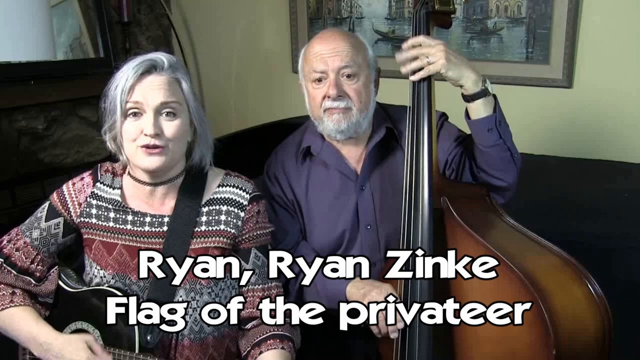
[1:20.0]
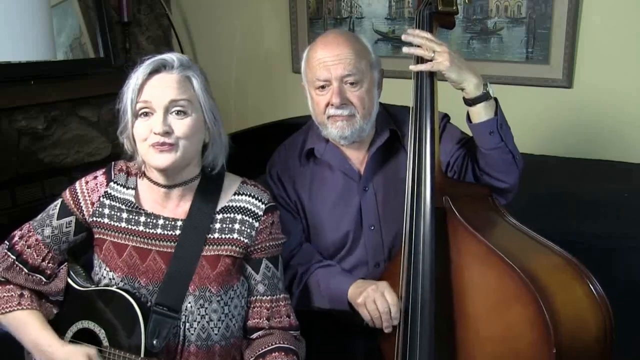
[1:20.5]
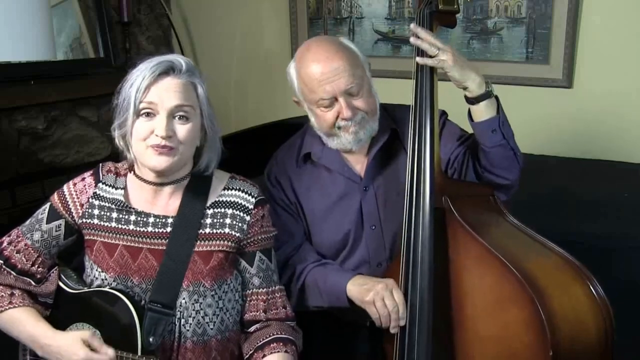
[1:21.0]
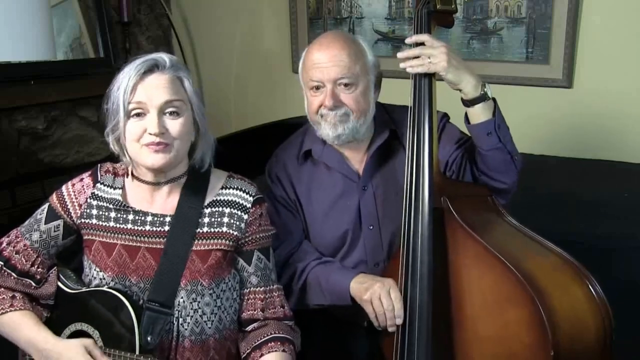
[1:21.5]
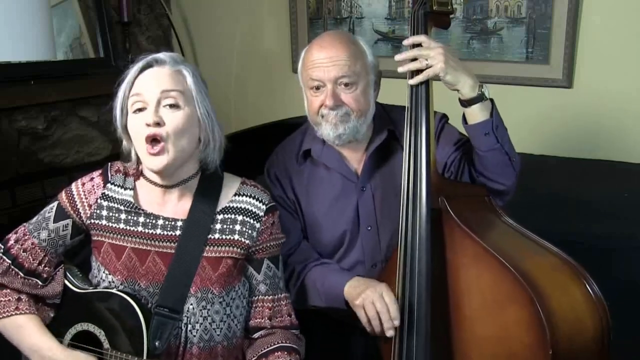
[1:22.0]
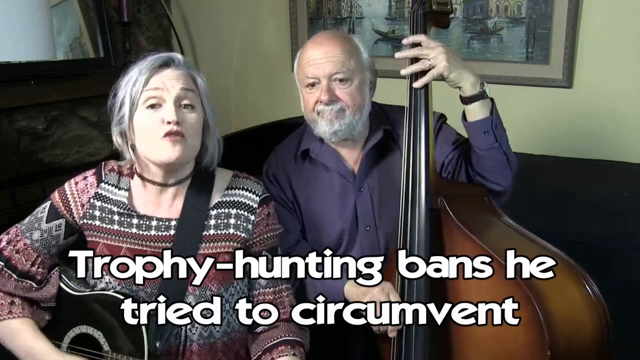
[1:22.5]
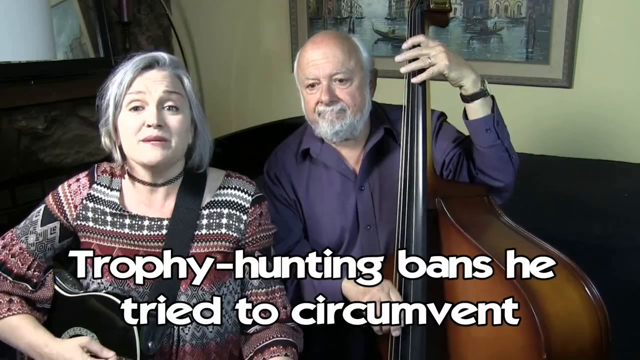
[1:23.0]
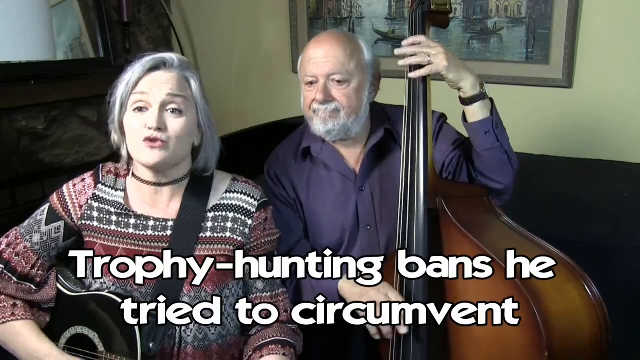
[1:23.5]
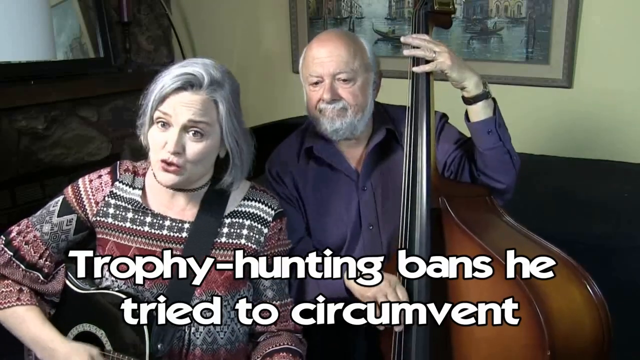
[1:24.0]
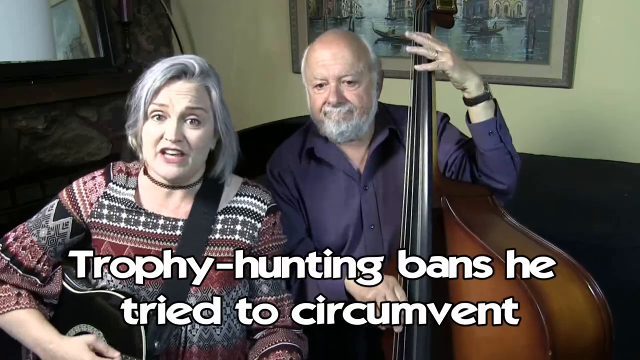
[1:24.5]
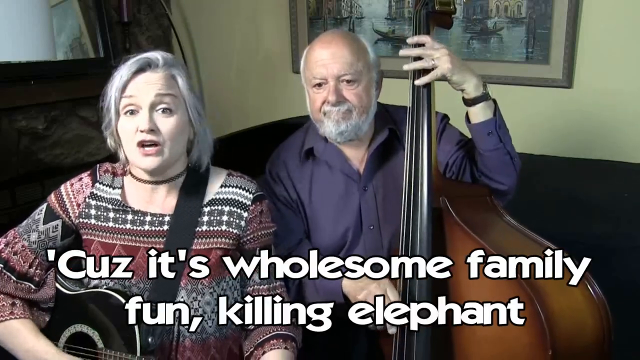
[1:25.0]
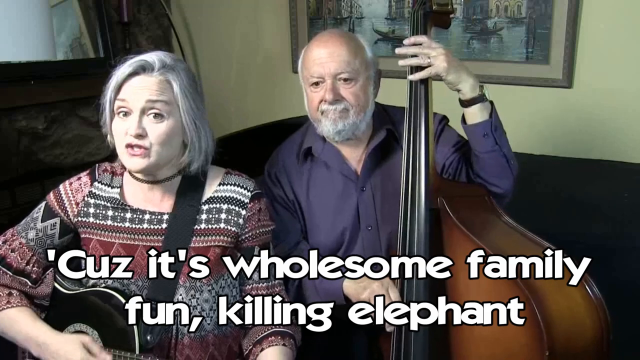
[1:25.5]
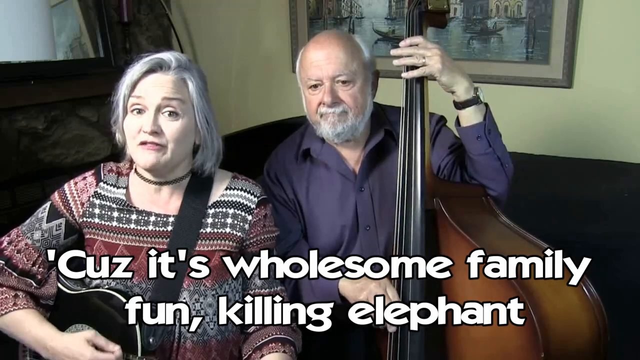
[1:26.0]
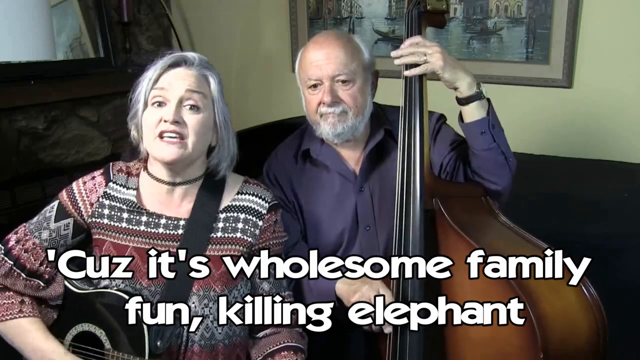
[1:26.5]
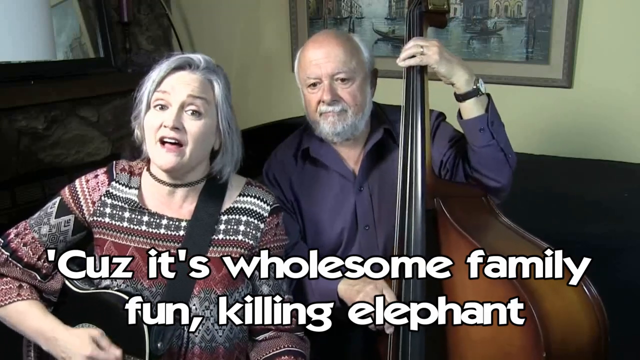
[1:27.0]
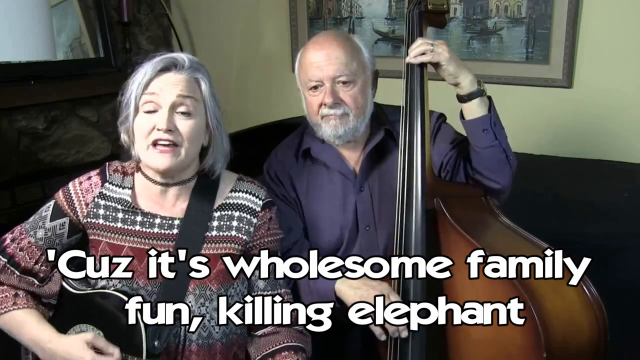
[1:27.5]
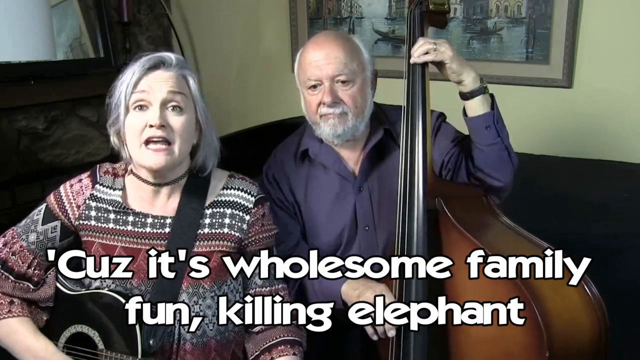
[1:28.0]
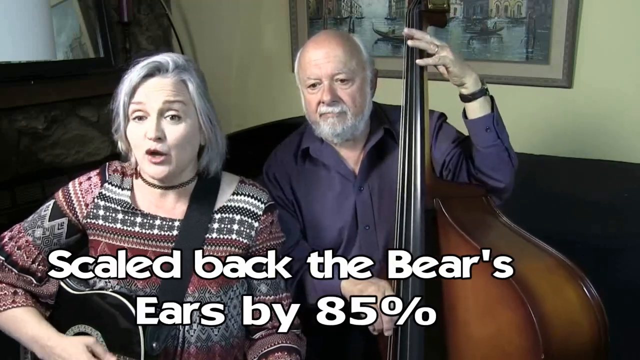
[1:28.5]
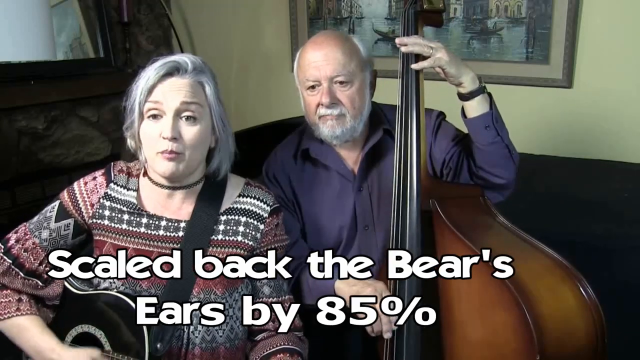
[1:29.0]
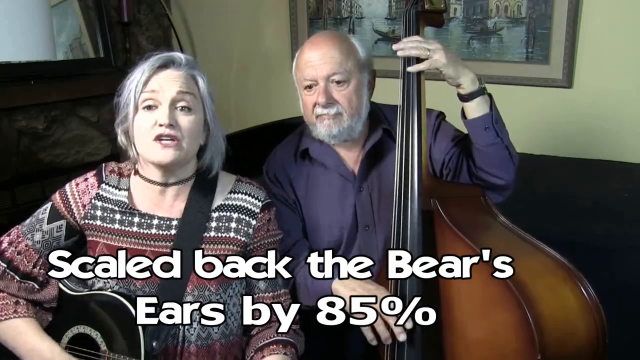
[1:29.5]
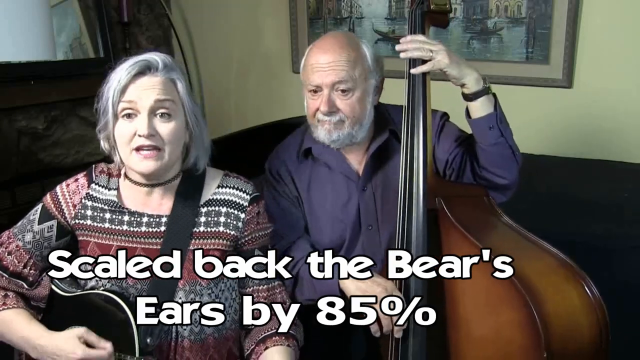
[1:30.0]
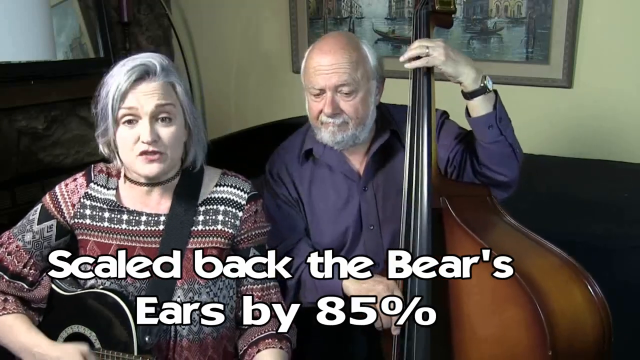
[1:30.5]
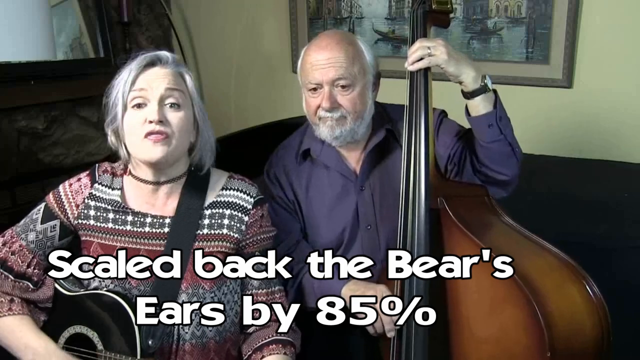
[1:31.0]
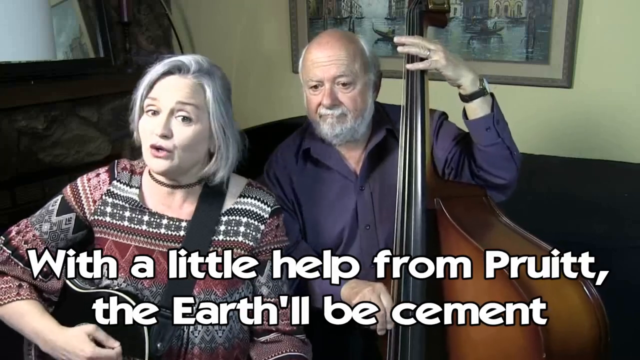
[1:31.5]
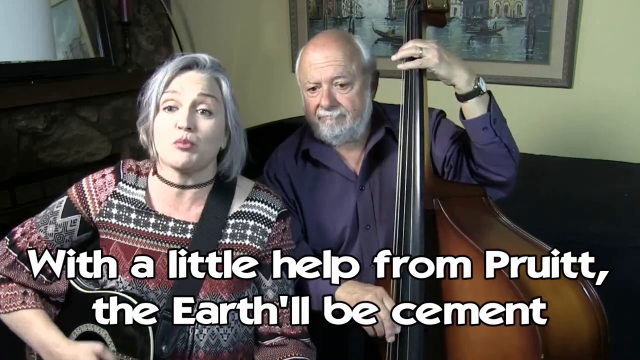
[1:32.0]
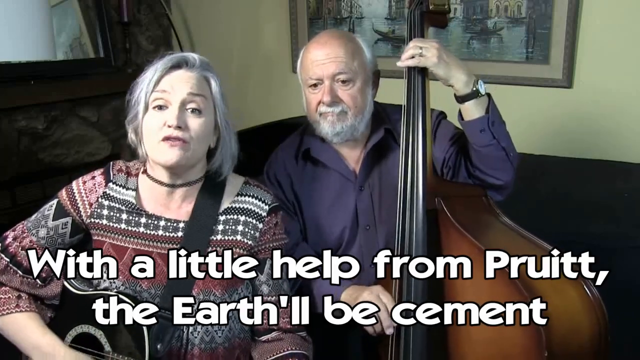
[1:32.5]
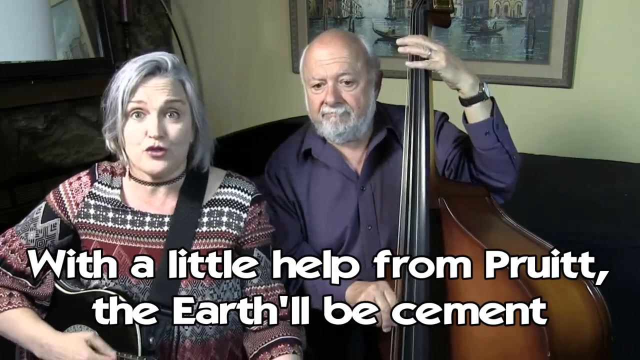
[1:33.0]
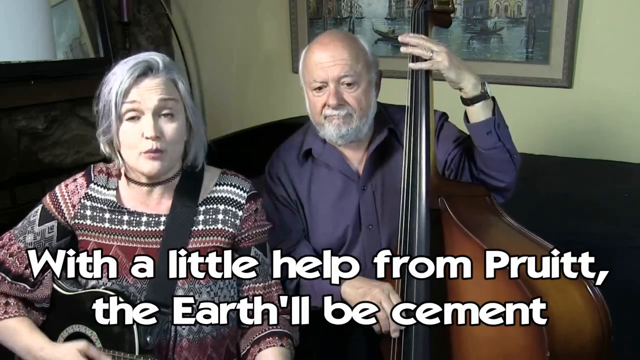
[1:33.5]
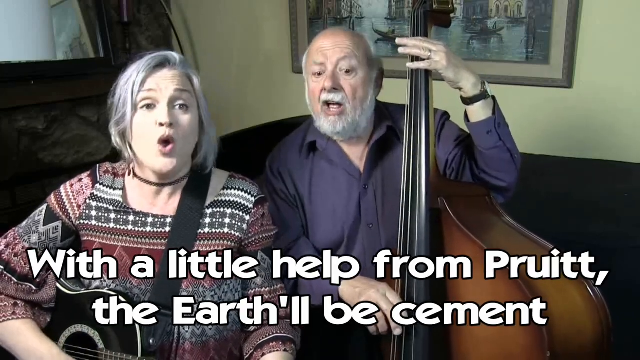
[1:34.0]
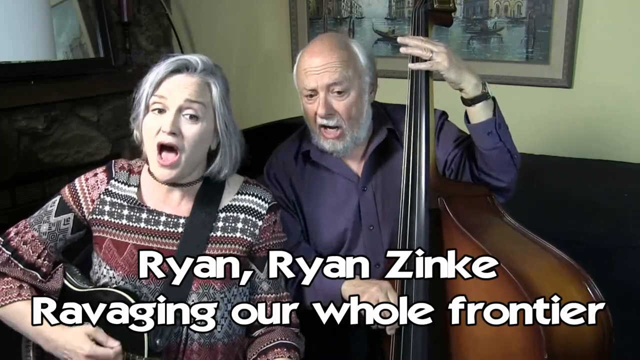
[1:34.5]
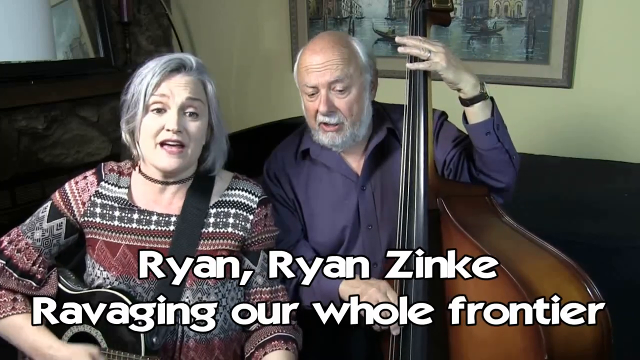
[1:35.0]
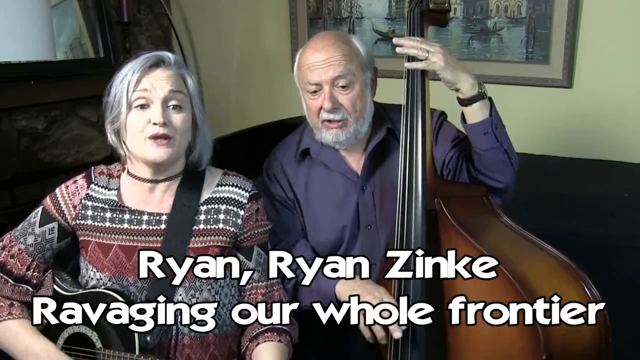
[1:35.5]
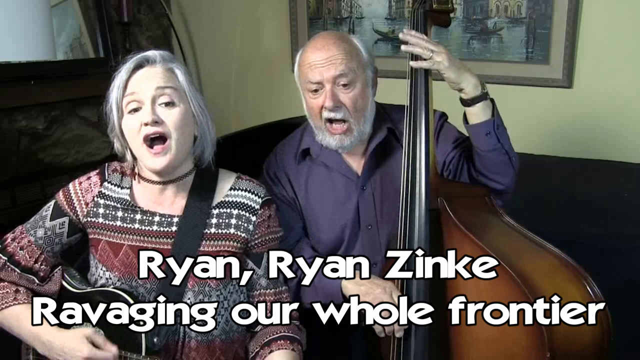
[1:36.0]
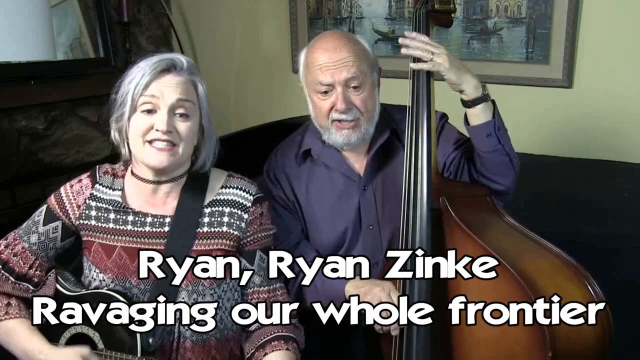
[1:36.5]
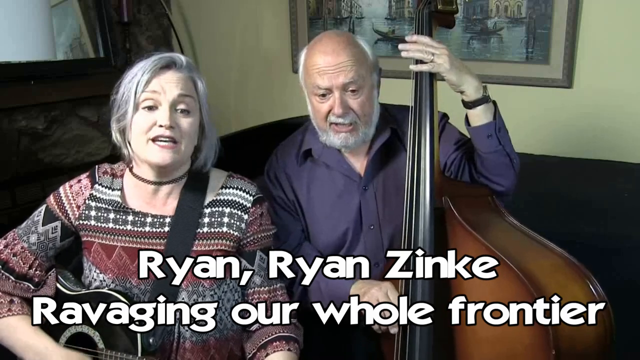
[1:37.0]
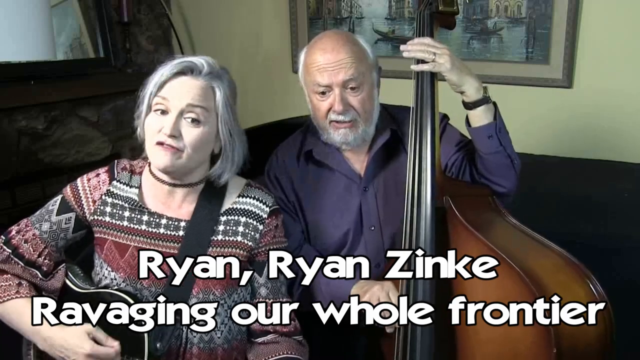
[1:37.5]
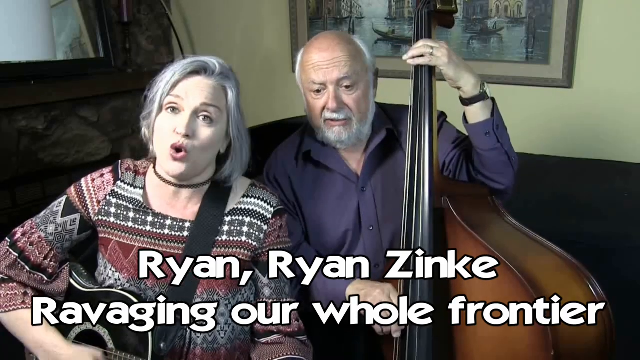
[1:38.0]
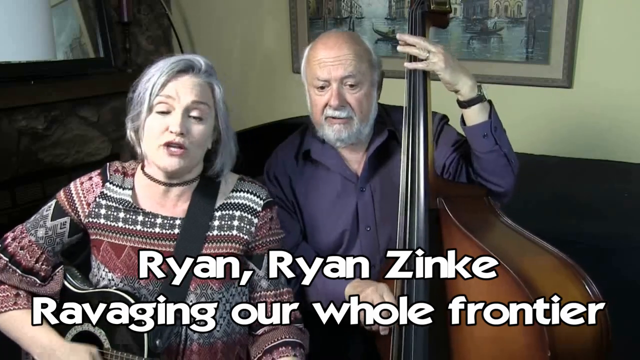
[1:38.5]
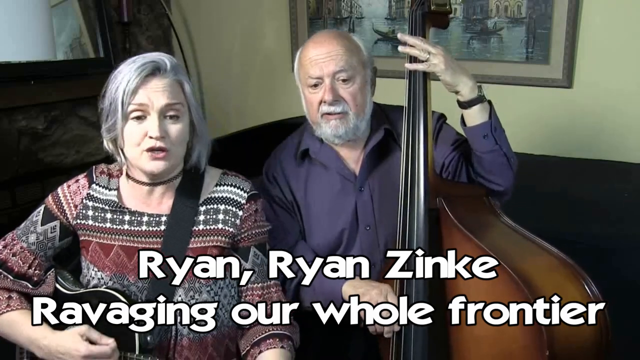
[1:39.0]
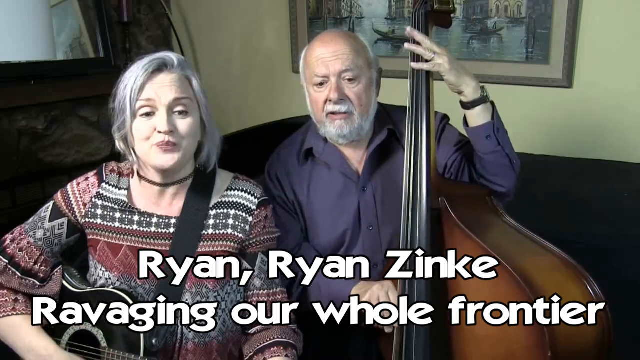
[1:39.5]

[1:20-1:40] The same man and woman continue singing, with subtitles including "wholesome family fun" and "flag of the privateer". The man still wears his black watch with his lavender button-down shirt and plays the stand-up bass, his left arm raised above his head. The woman still wears the multicolored Albuquerque/New Mexico-style shirt and plays a black and white guitar; she has a black necklace, silver hair and brown earrings. They are still in the same living room with the creamy teal wall, the picture on the wall and a window to the left. The subtitles are white.